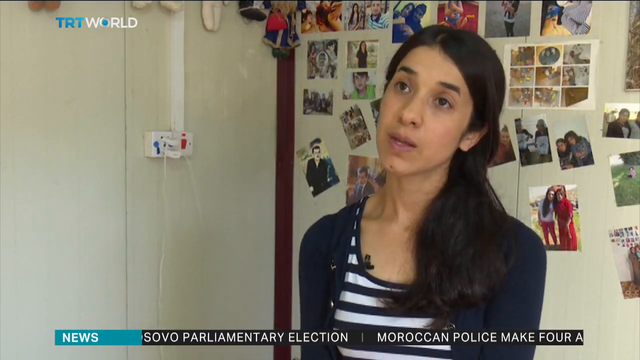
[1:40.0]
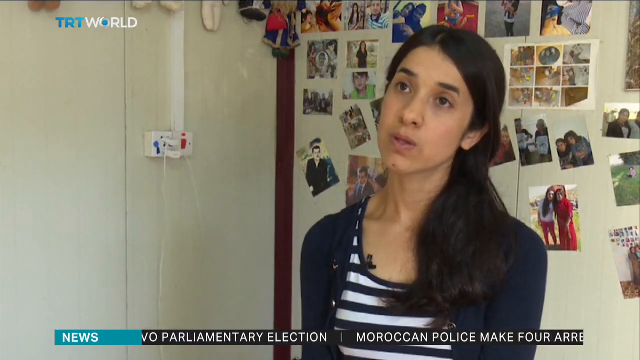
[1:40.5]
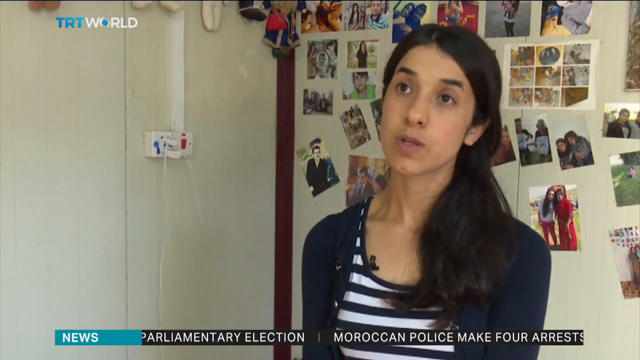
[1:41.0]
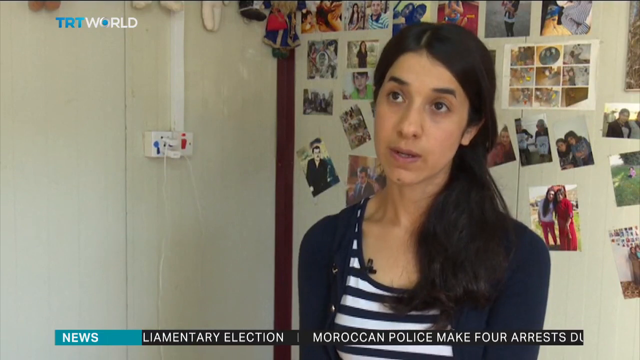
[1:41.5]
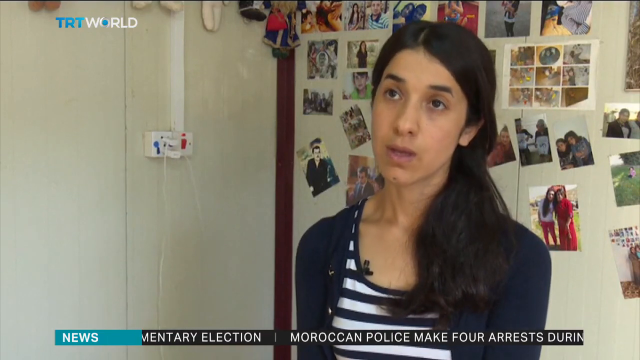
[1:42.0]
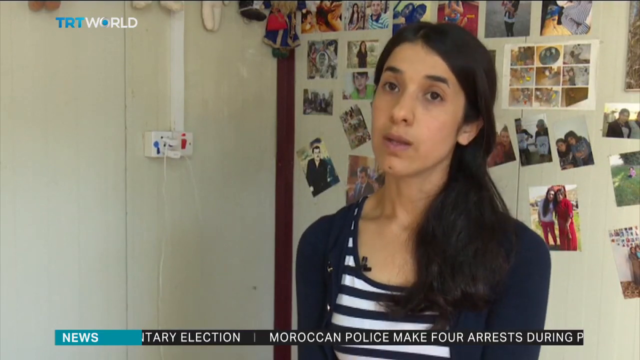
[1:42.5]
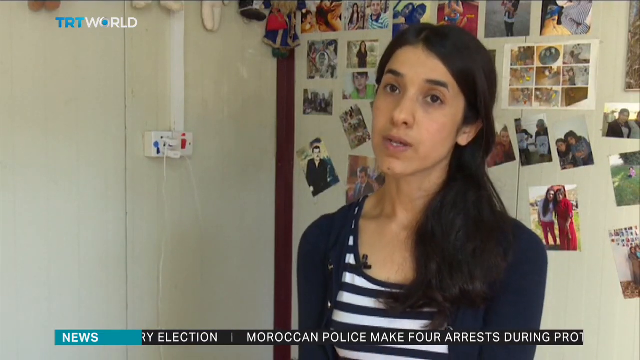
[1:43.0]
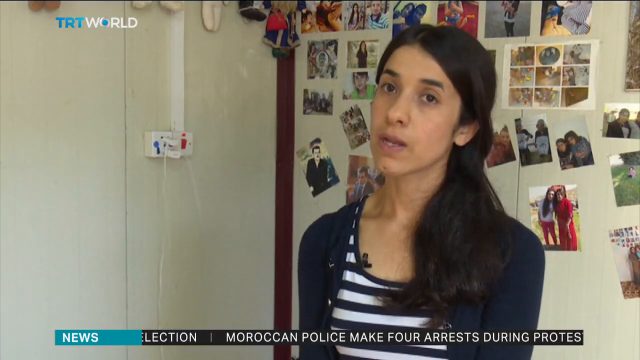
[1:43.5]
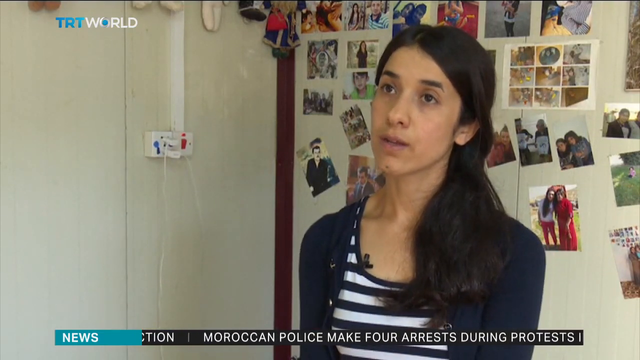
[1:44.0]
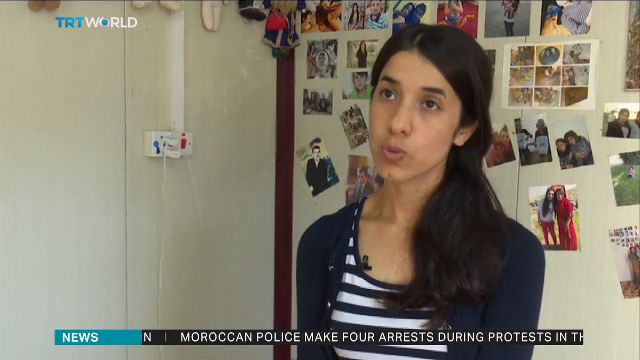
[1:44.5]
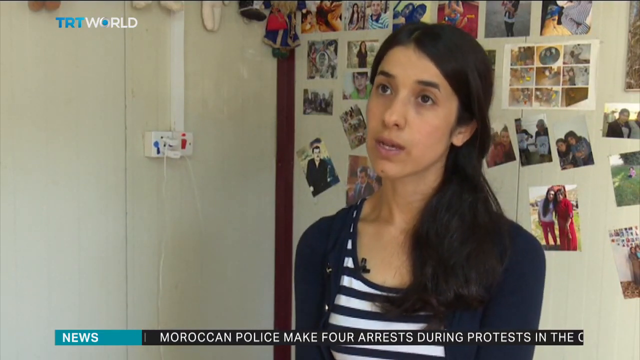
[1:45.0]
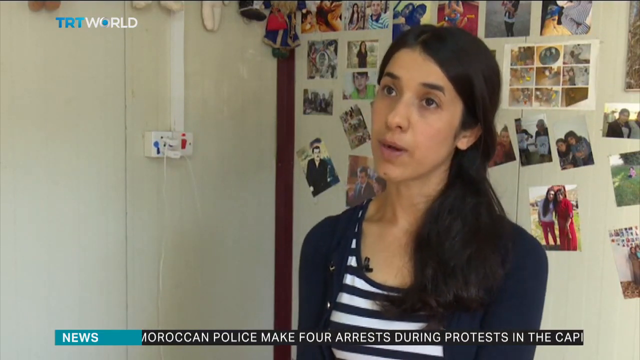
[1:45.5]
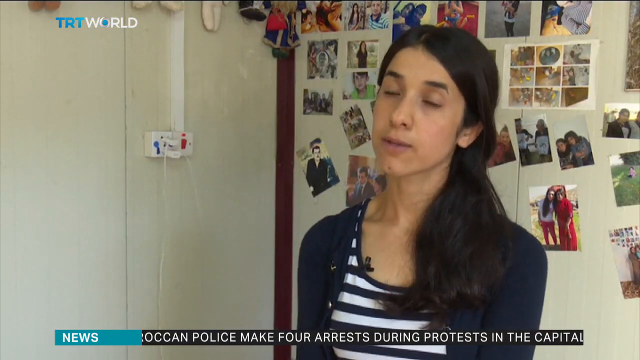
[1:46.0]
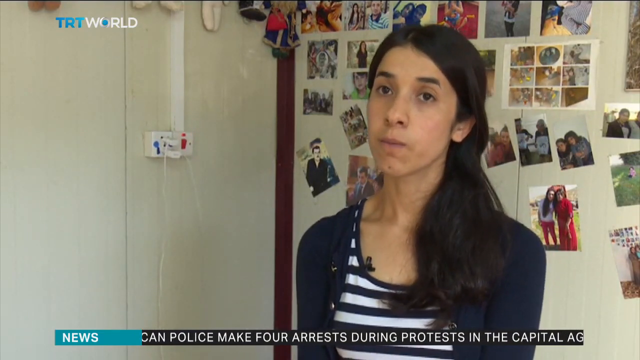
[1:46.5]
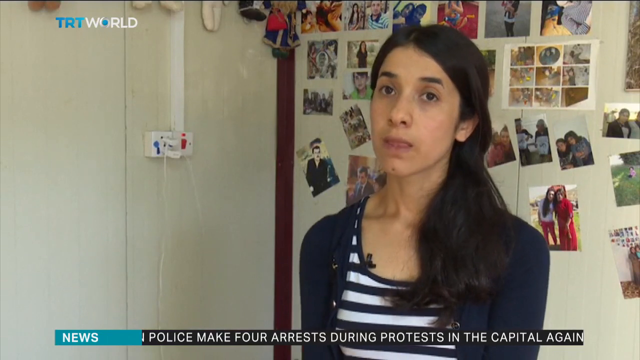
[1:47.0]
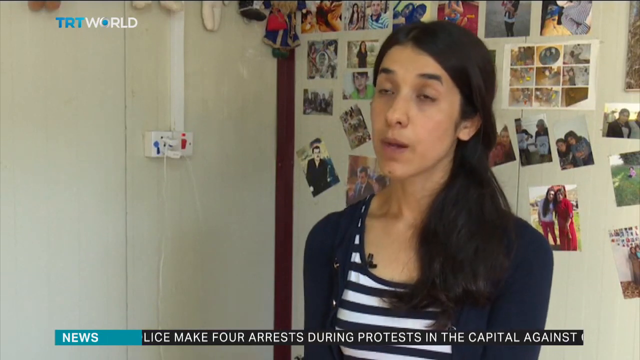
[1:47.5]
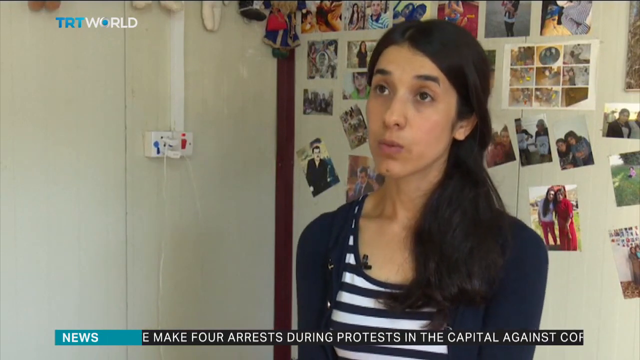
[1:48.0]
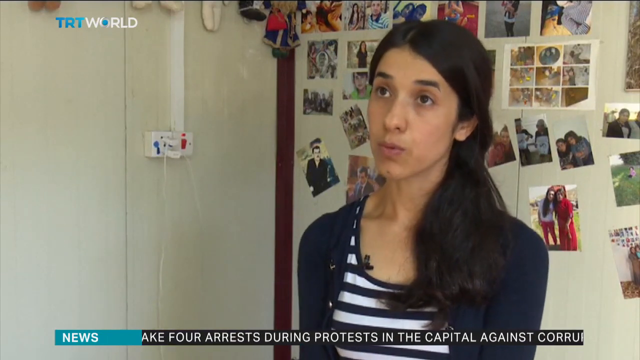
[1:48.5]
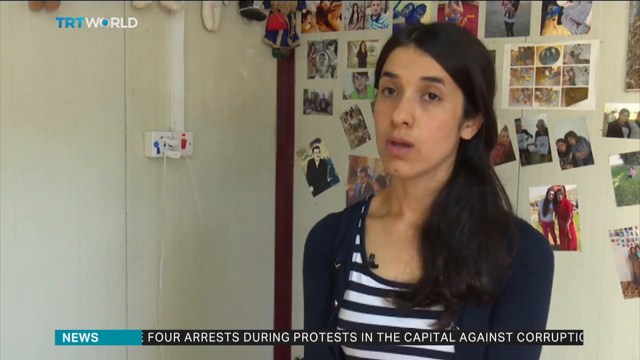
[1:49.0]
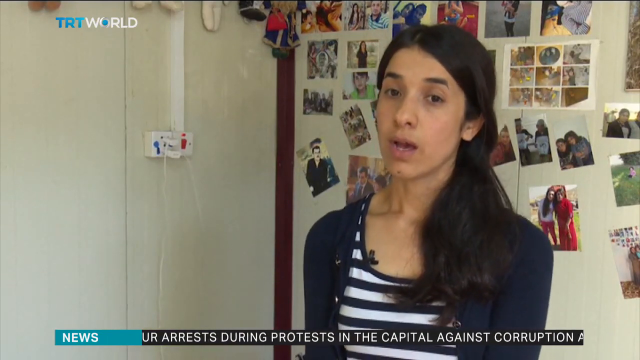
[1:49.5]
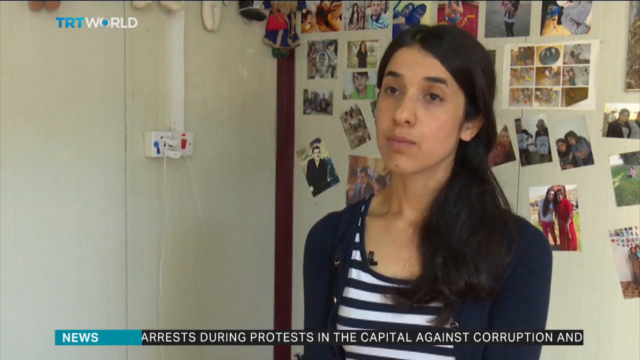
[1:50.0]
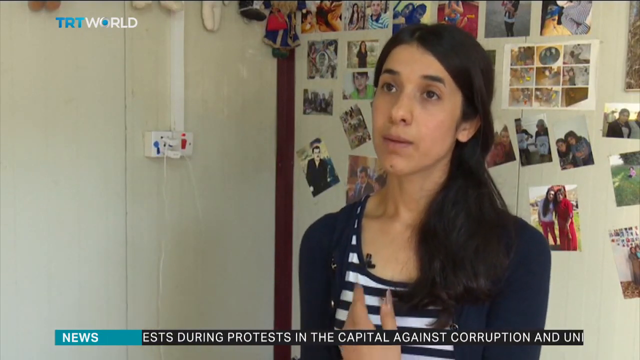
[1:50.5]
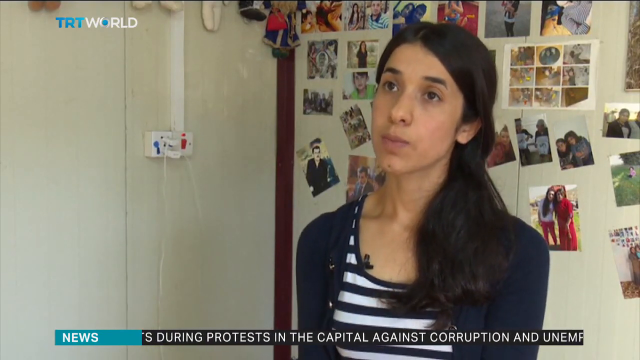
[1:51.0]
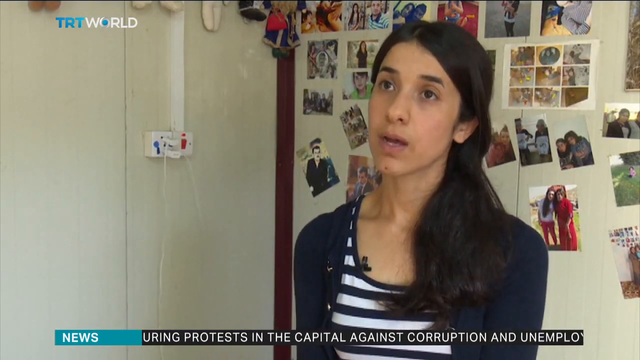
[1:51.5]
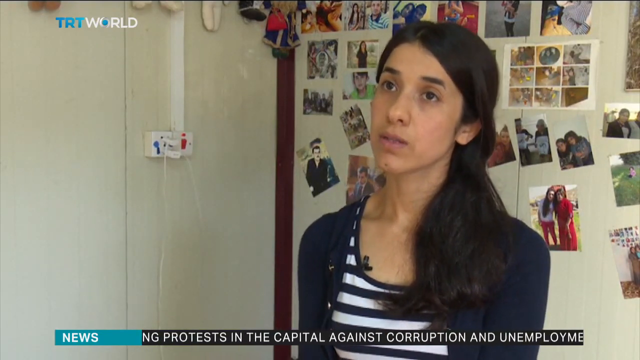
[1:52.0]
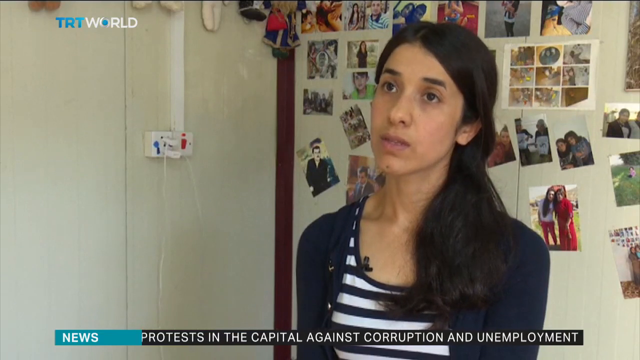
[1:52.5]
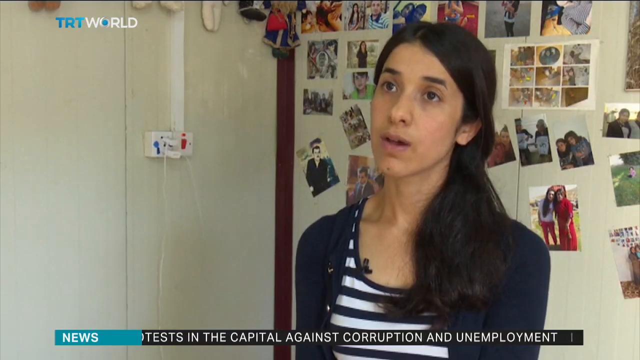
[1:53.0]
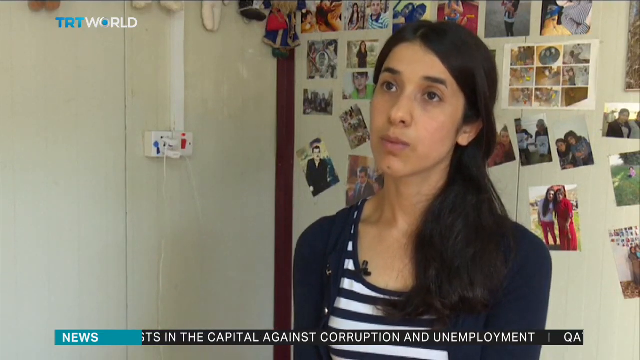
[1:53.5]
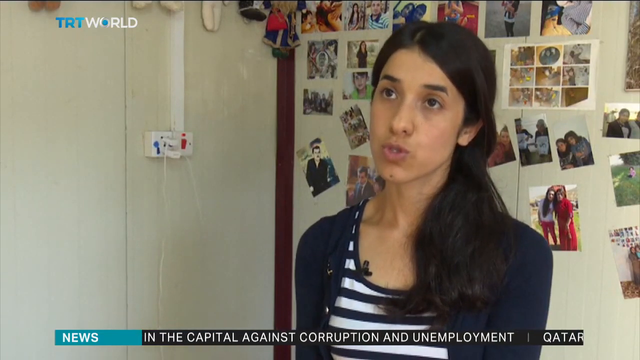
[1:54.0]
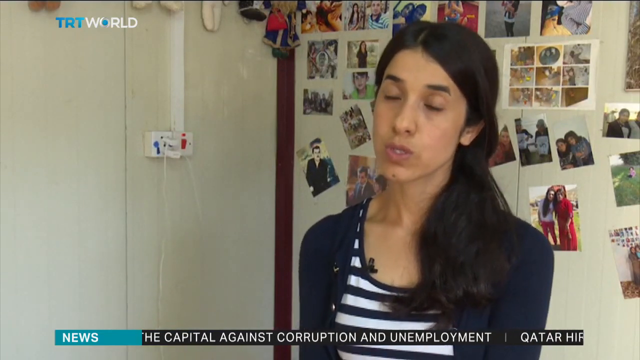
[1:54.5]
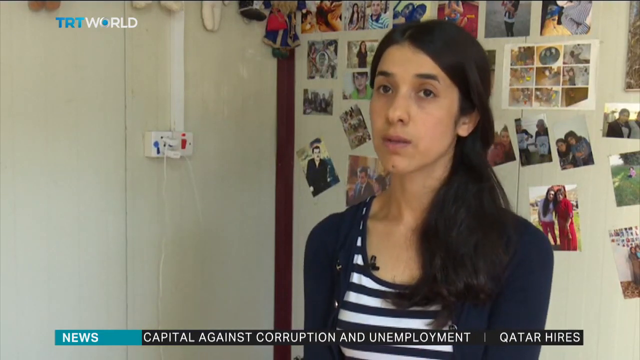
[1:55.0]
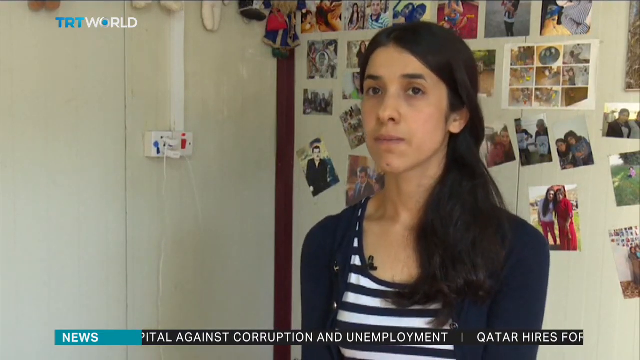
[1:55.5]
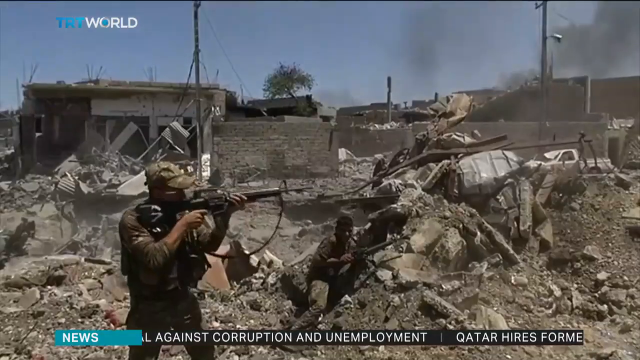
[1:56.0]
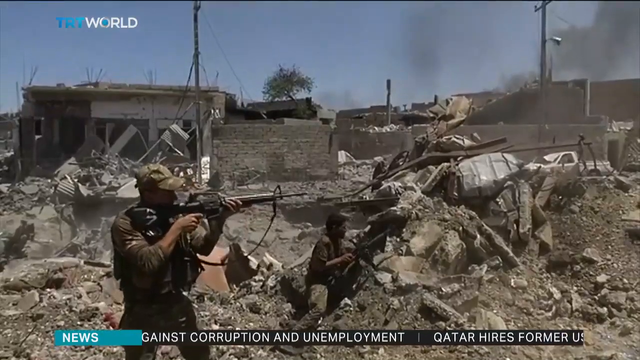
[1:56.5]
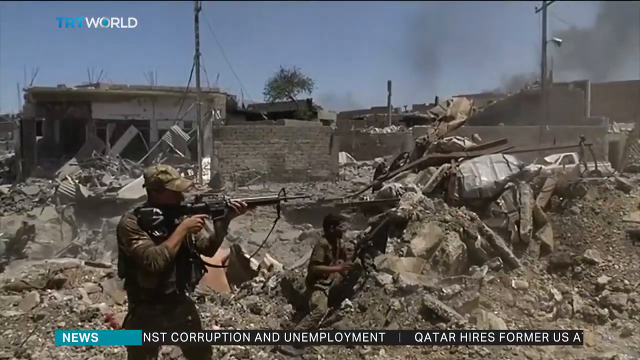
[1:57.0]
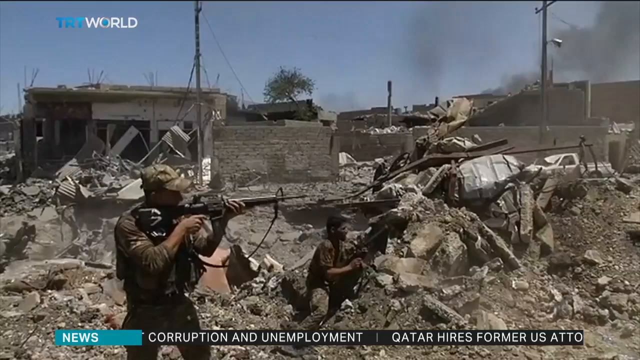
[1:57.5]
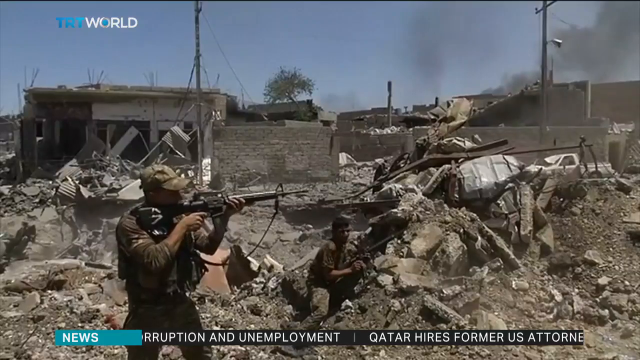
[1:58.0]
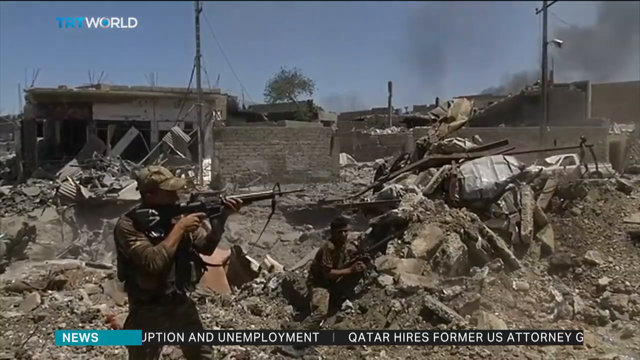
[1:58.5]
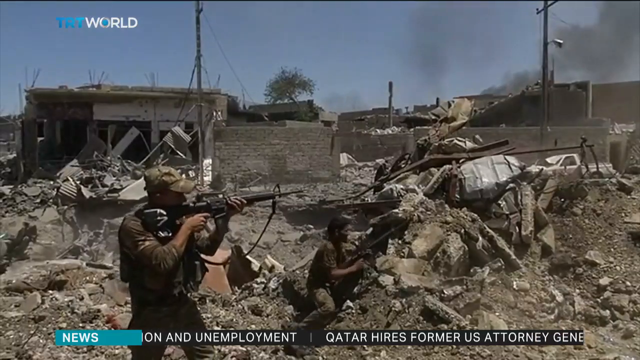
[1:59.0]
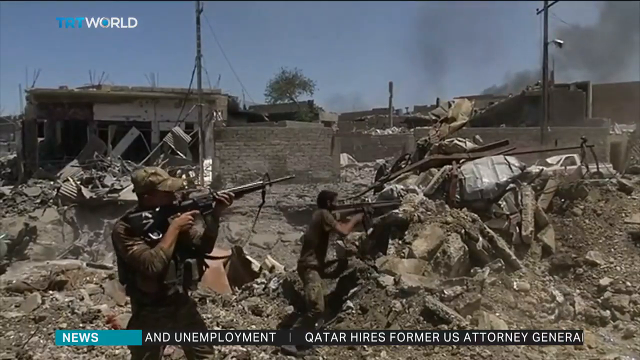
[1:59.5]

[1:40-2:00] Text at the top of the video reads "Nadia Murad", identifying the formerly enslaved woman, and "TRT" appears in the top corner. She appears to be talking to an interviewer; she is a thin woman, and her eyes look weak and weary. Then at least three men in combat, behind an embankment, look like they are shooting rifles toward something that is not visible. The video returns to Nadia Murad, who still looks sad and weary, with sad dark eyes and her arms down at her sides. She is the only person in the shot, and pictures of people hang on the wall behind her. Next the men shooting rifles appear again. The sky is blue, and the scene appears a bit smoky, probably from the gunfire and debris.